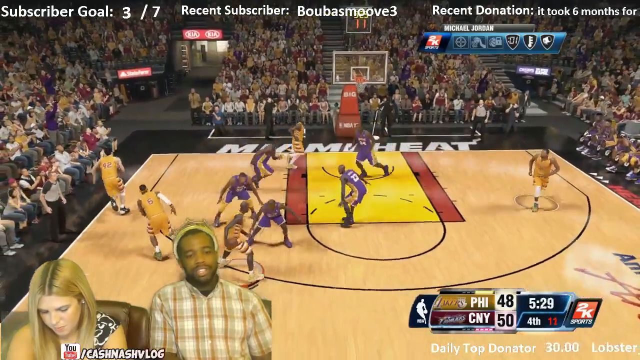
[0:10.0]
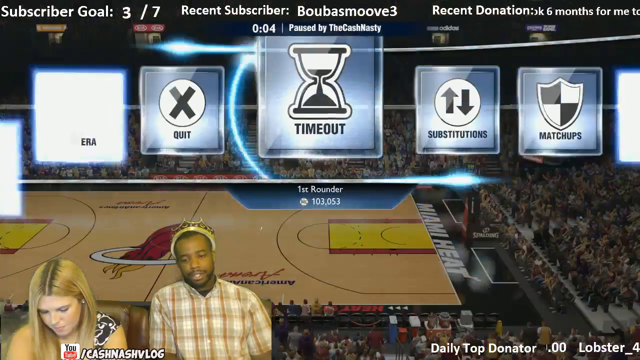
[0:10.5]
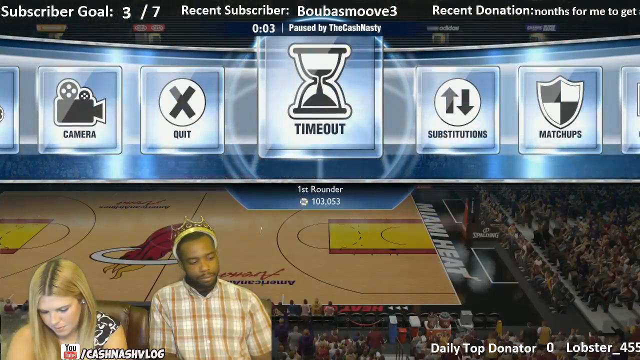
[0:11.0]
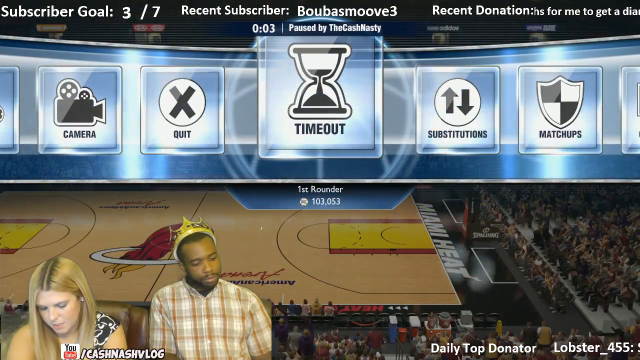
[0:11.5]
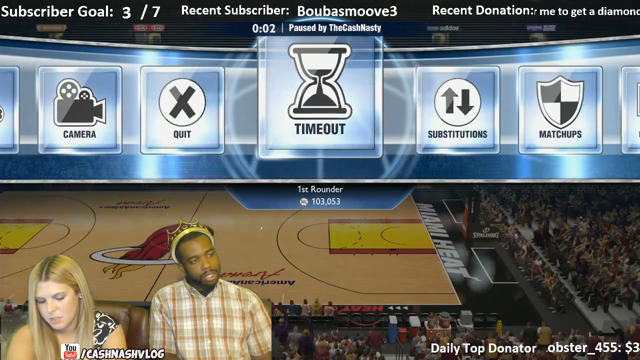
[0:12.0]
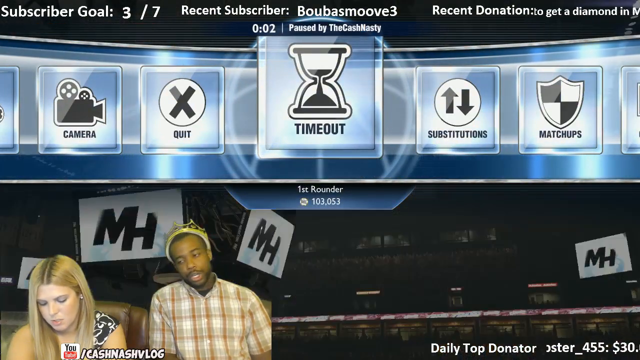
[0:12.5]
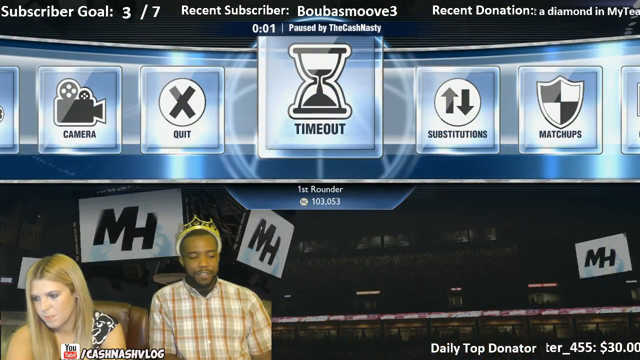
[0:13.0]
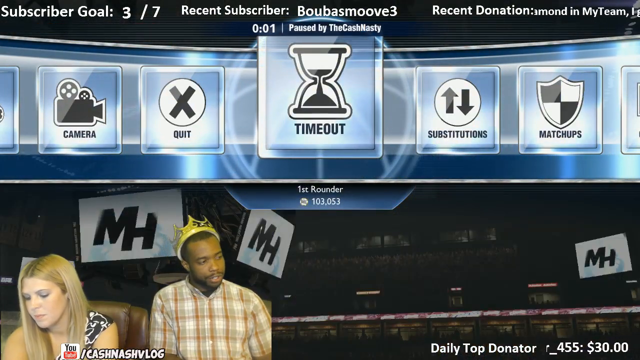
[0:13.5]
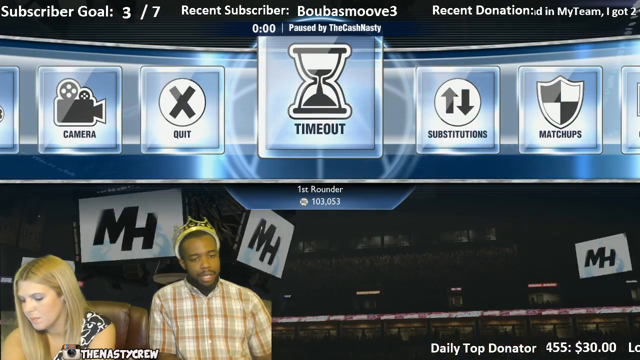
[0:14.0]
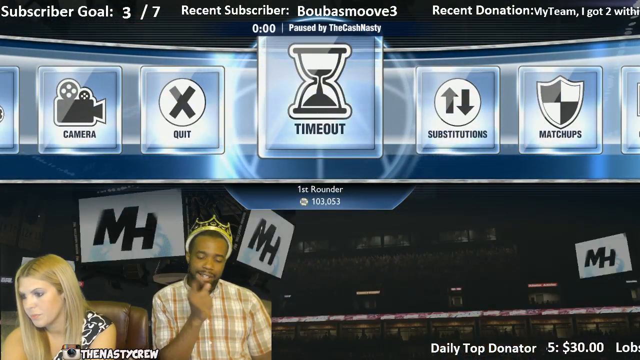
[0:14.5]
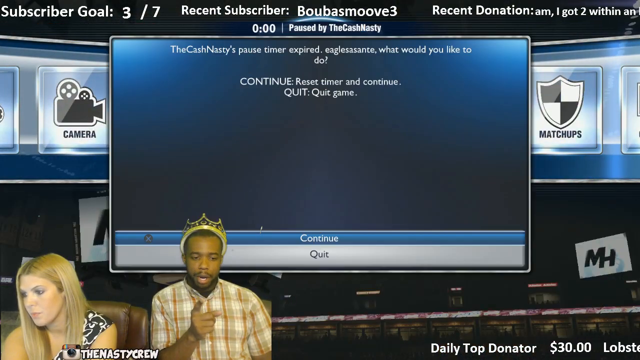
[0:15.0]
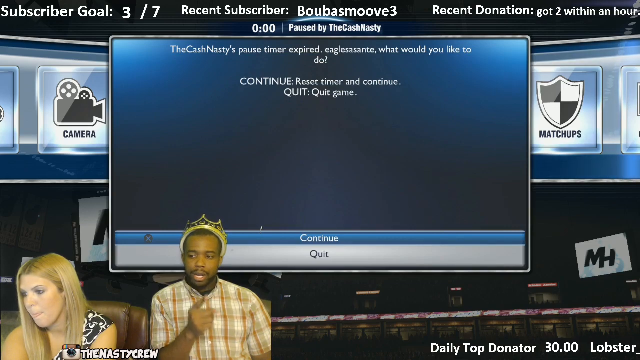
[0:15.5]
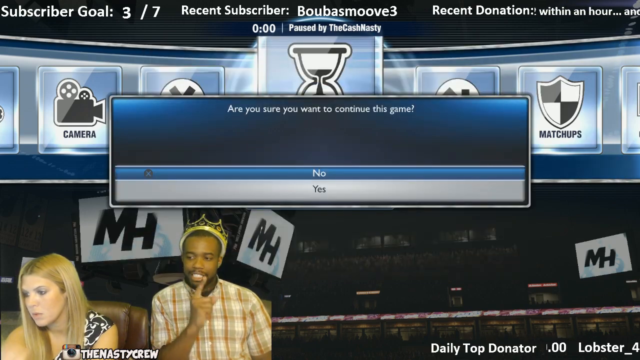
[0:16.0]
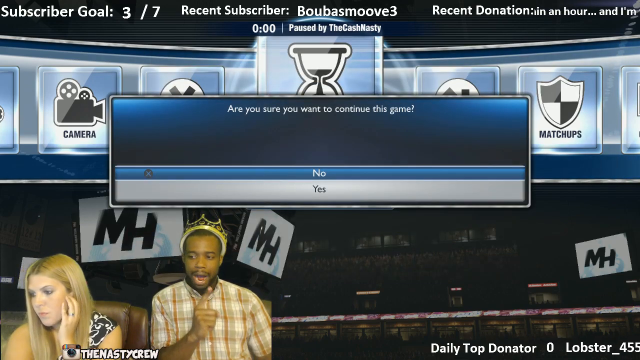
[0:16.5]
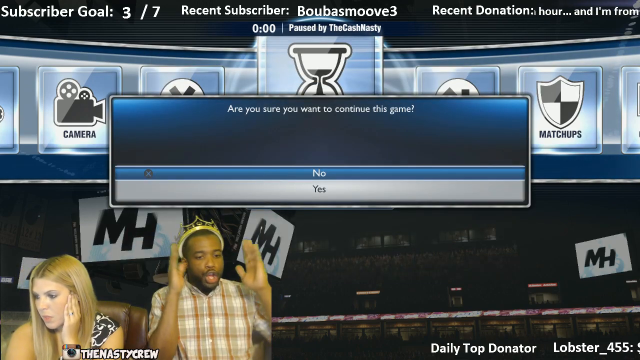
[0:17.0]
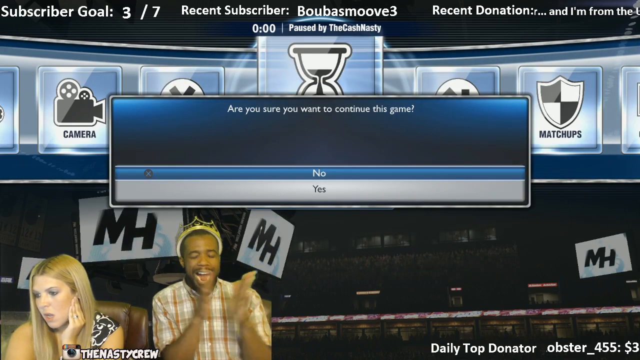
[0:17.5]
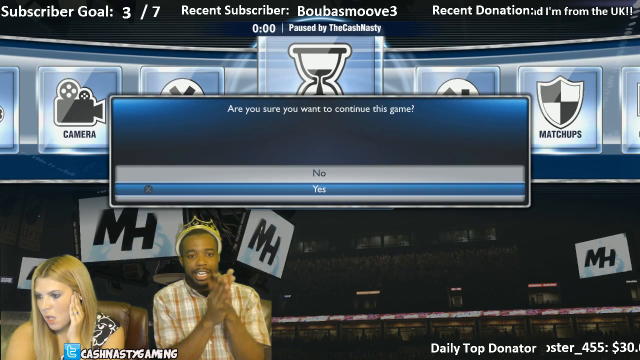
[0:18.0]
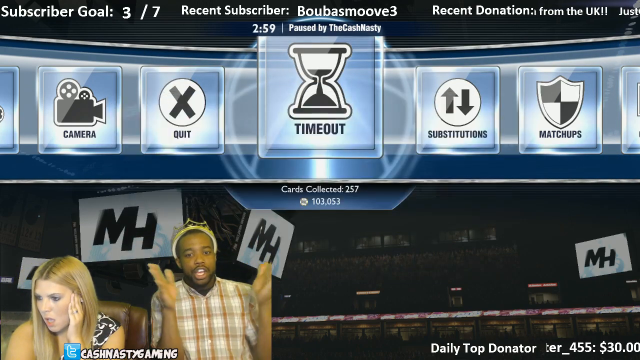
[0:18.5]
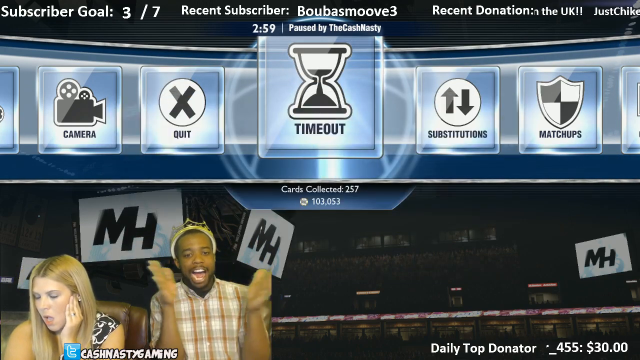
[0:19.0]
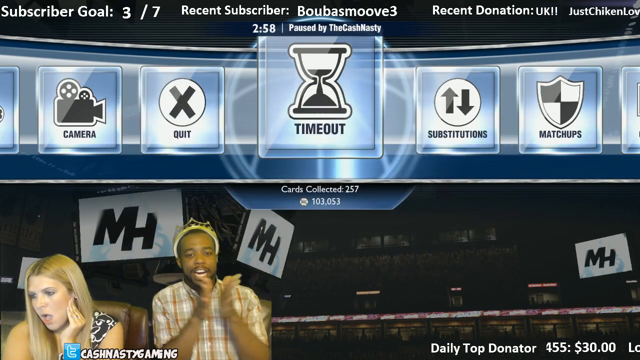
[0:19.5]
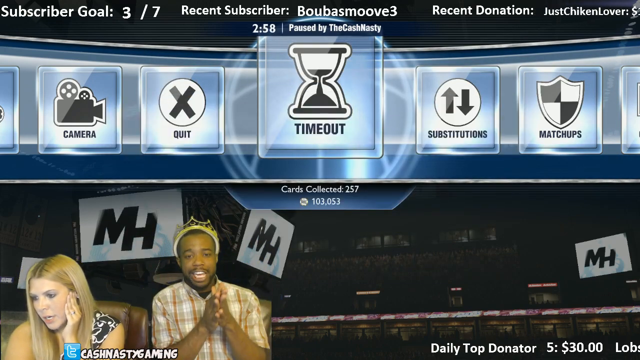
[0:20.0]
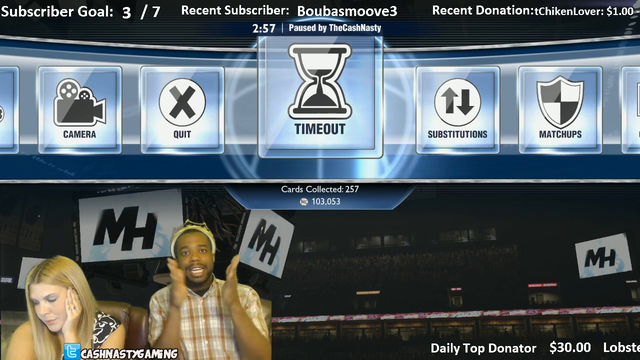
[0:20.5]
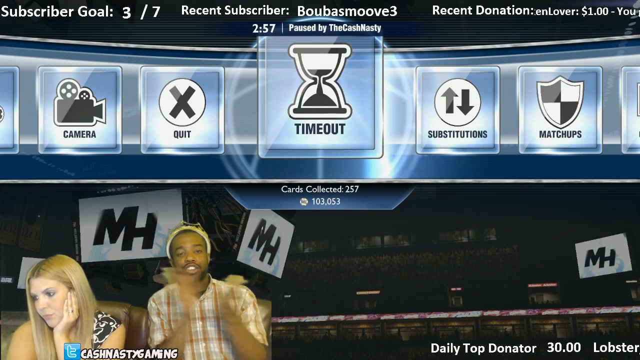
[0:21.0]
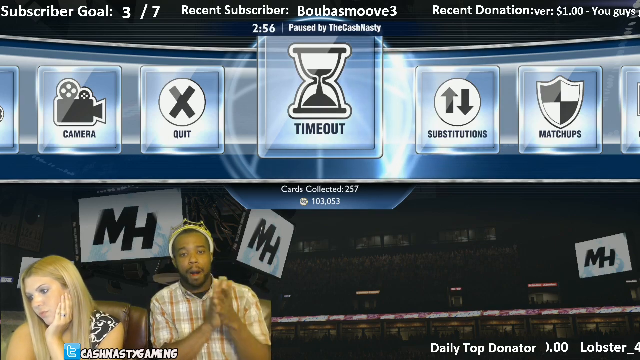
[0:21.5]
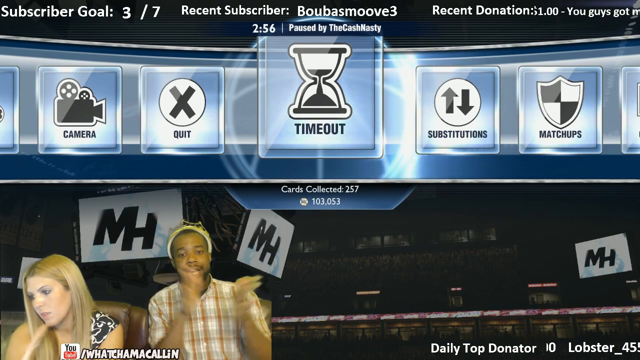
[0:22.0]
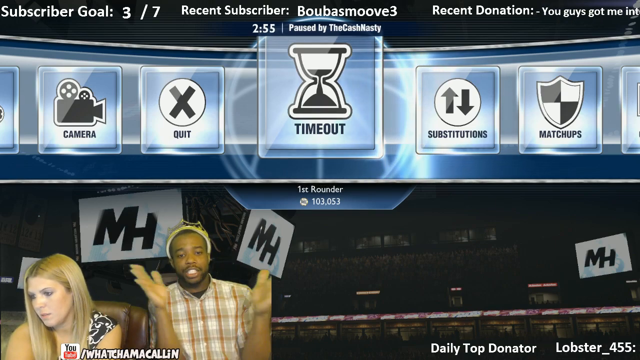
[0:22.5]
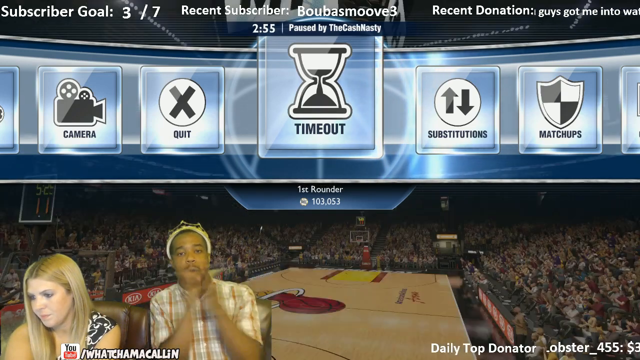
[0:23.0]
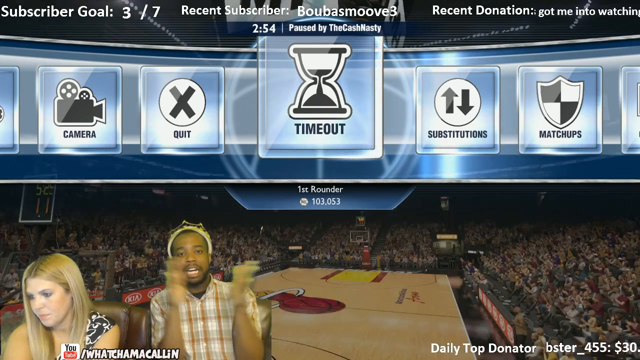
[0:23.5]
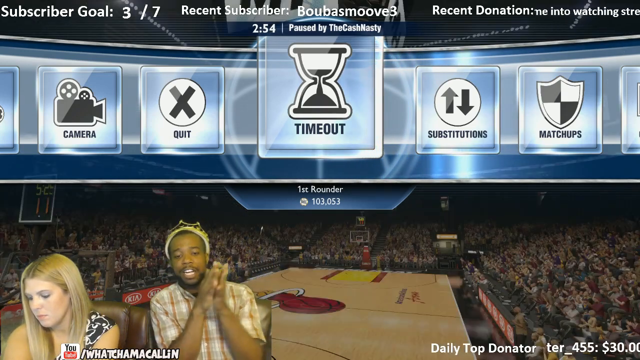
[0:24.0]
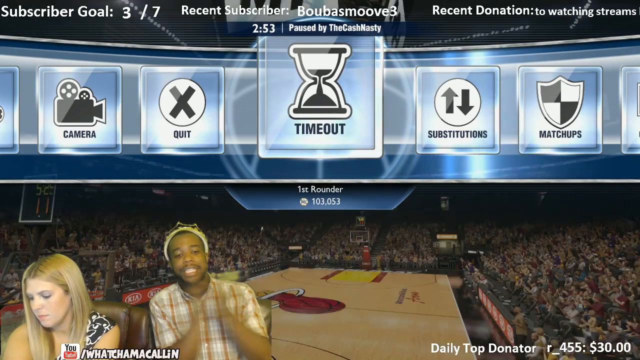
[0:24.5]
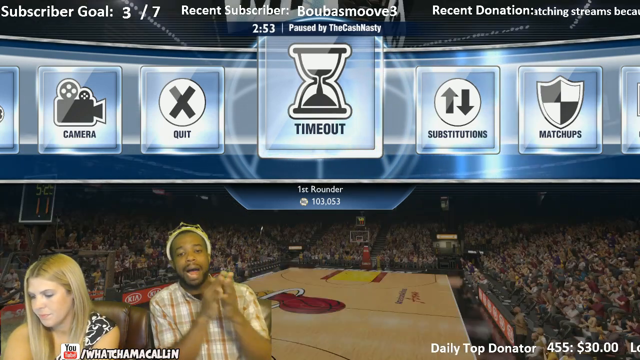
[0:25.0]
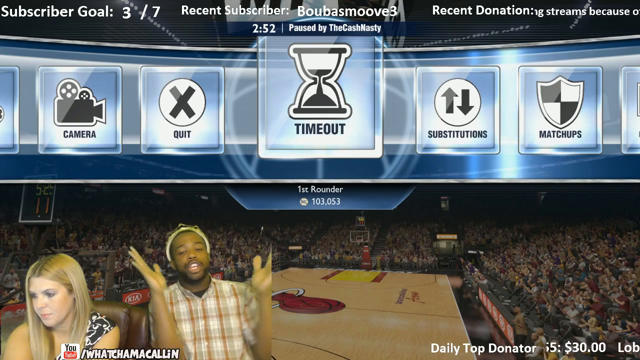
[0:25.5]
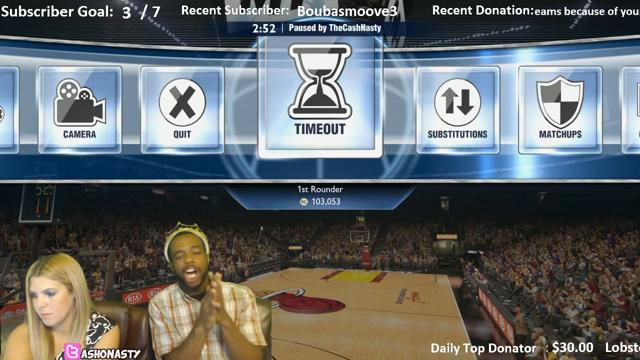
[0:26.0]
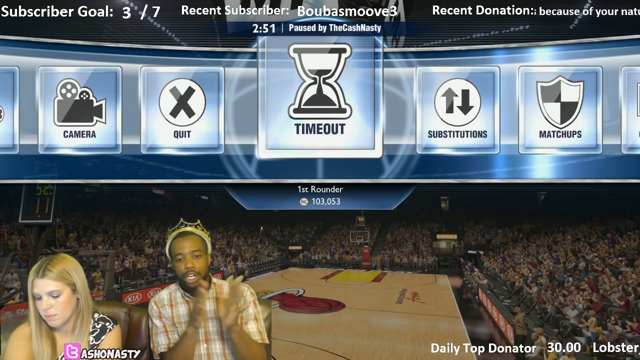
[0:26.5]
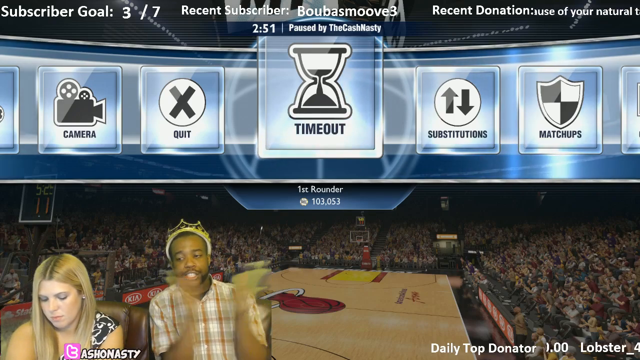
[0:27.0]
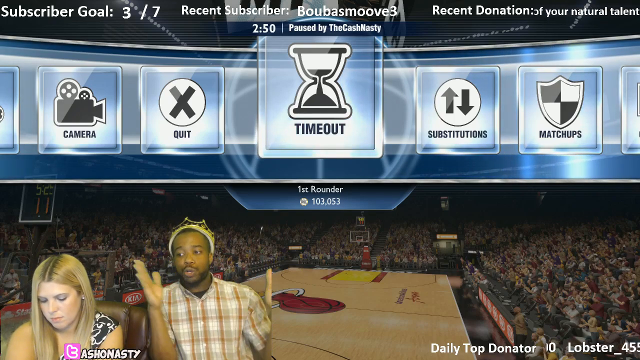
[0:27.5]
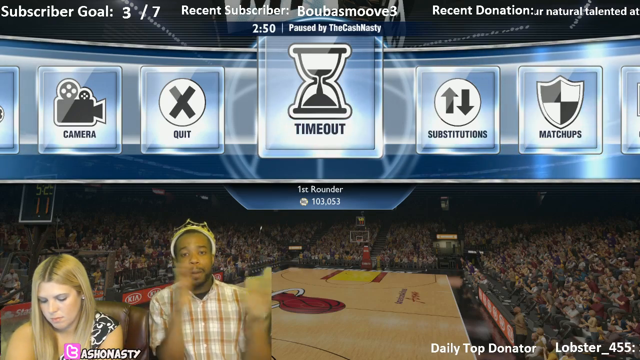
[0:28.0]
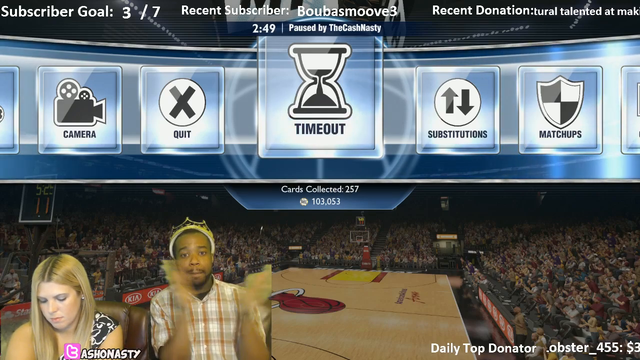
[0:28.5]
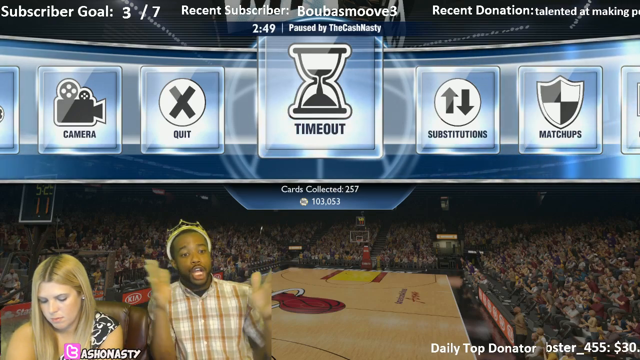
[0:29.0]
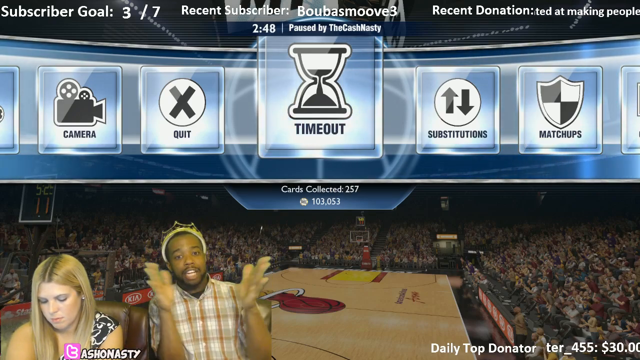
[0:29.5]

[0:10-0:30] The man playing the game presses the option button, and as he pauses, several options appear: camera, quit, timeout, substitution, and matchup. The blonde woman seems to be looking down at her phone, not paying attention to the game, while the man pays full attention. In the top left, subscriber goals read 3 out of 7, and a recent subscriber is listed as Bobosmoves3. A recent donation appears in the top right. The man seems to be calling a timeout. He seems to be talking into the microphone in an upset manner, holding his right finger out. A yes-or-no option to continue the game pops up, so he seems about to continue. He claps his hands in what looks like an angry manner, seemingly talking about the game, either very excited or very frustrated.